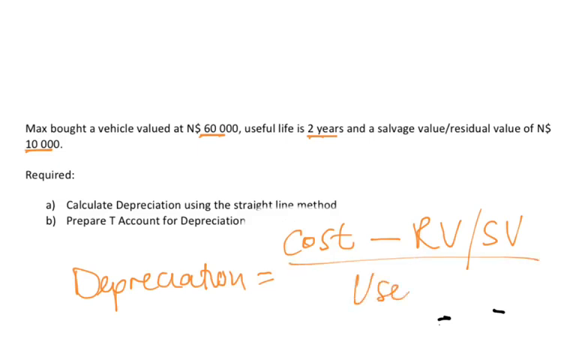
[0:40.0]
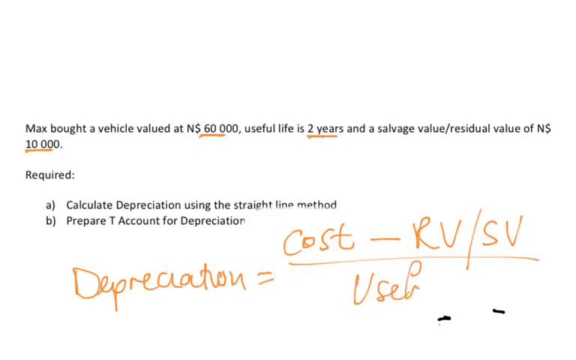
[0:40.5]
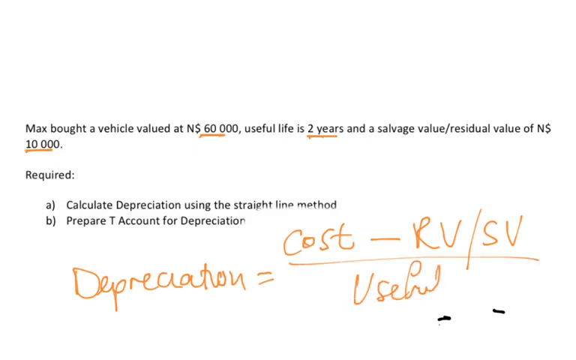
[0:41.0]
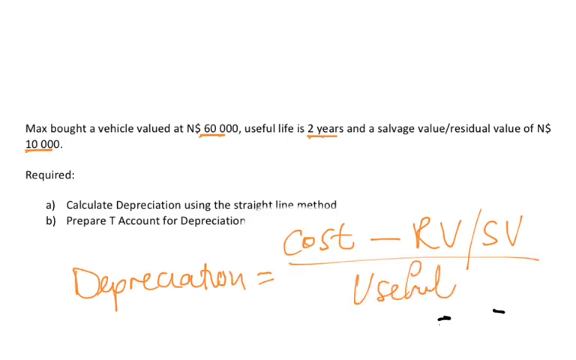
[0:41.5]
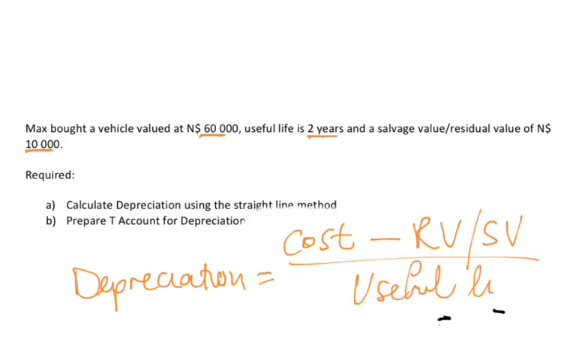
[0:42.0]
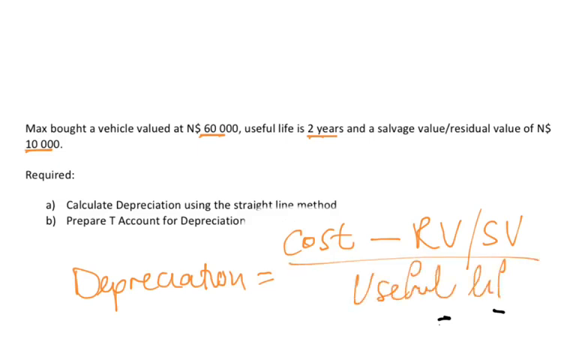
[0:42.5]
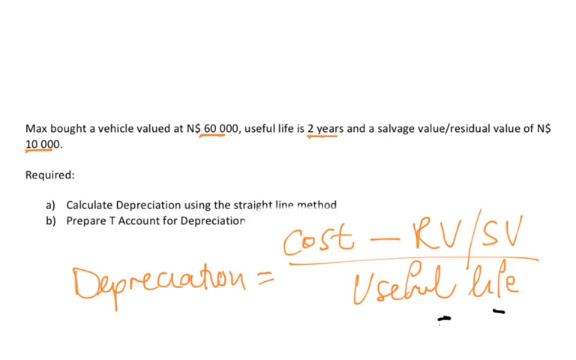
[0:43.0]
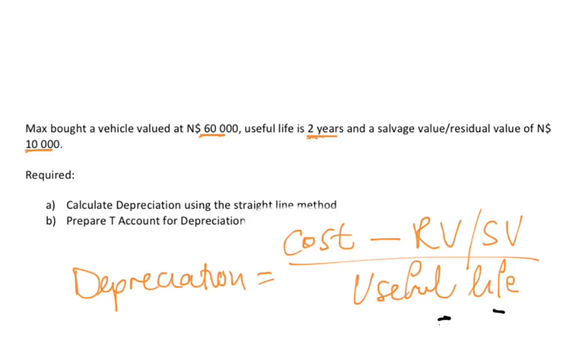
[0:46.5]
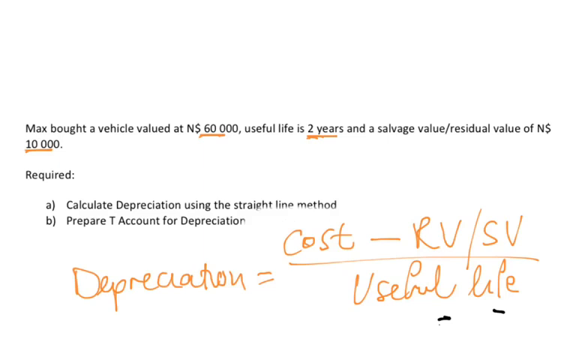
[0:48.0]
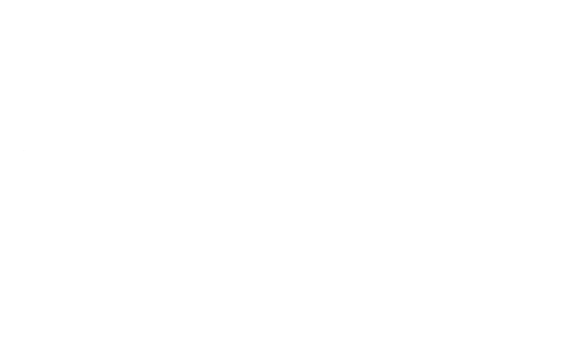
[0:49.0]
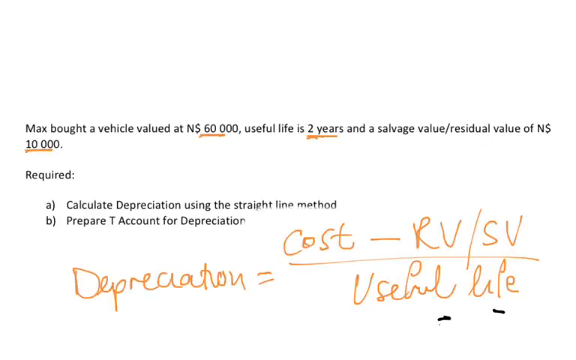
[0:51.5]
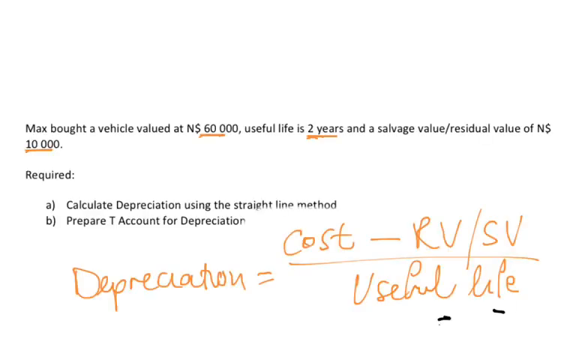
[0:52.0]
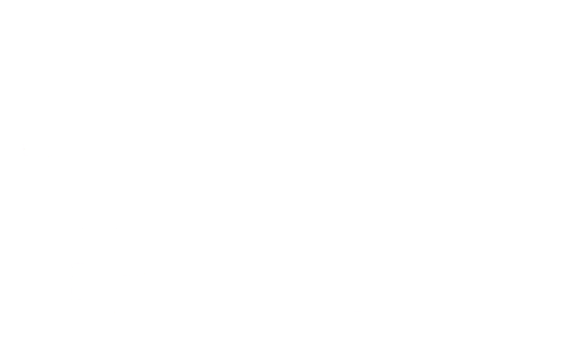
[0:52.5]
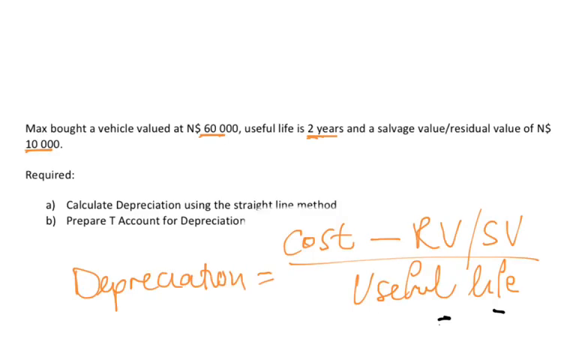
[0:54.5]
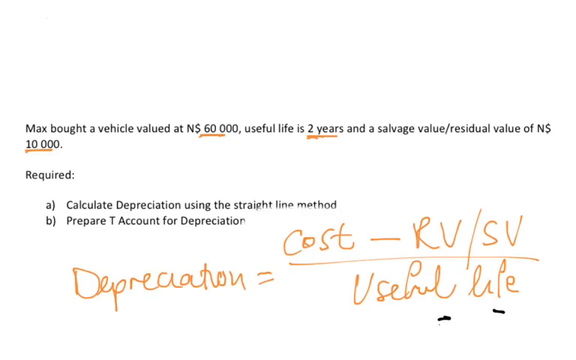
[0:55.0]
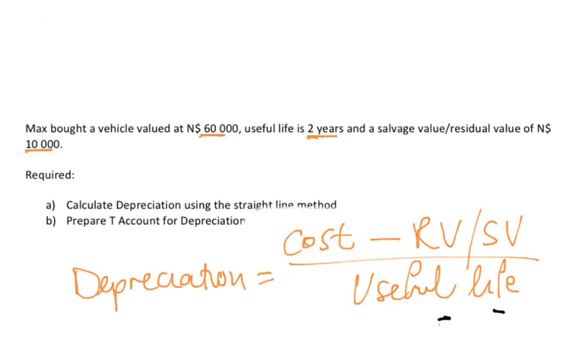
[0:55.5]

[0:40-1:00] A slide presents a mathematical problem that reads: "Max bought a vehicle valued at N$60,000, useful life is 2 years and a salvage value/residual value of N$10,000." After a space below it says "required:", and after another space, "A) calculate depreciation using the straight line method". Below that it says "B) prepare a T-account for depreciation". The various numbers in the word problem are all underlined in orange ink. Below the problem, a calculation is written out in slightly sloppy orange ink: "depreciation =", and to the right of it, "cost - RV/SB over useful sale". On the bottom right there are two random drawn lines. The entire problem is then cleared out.